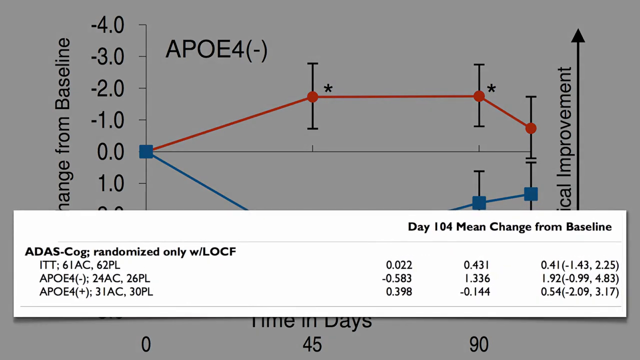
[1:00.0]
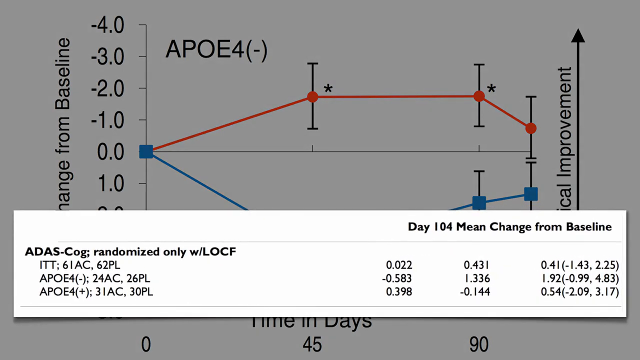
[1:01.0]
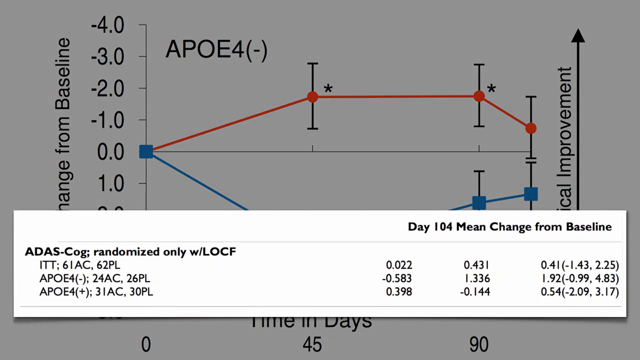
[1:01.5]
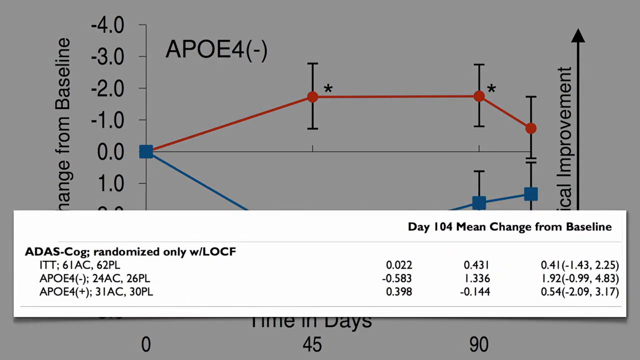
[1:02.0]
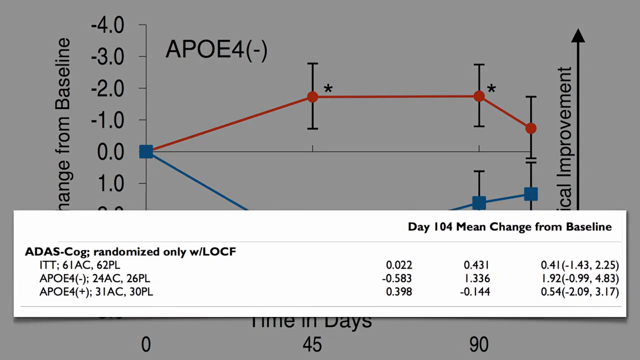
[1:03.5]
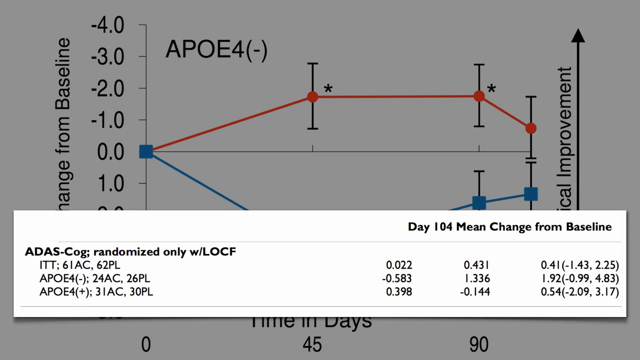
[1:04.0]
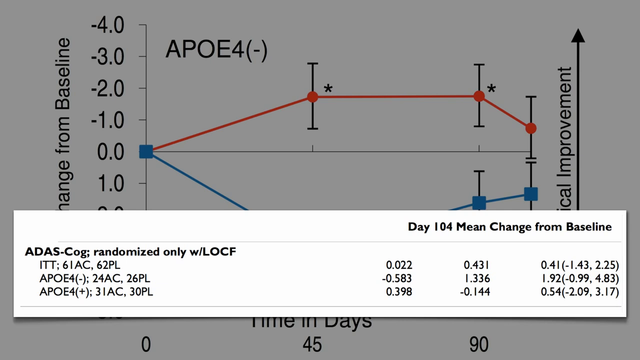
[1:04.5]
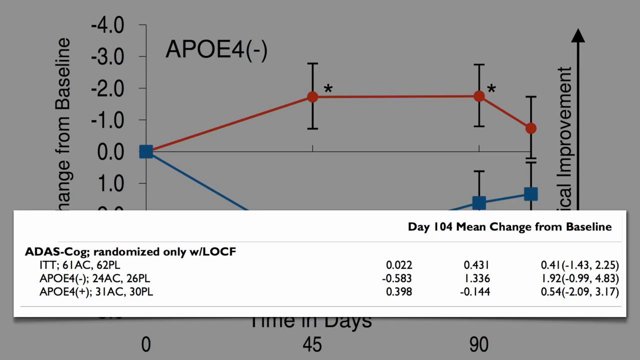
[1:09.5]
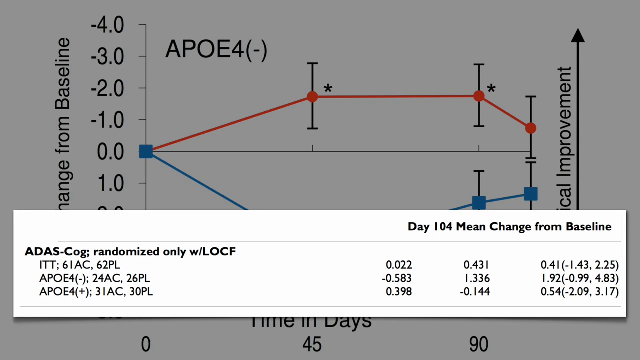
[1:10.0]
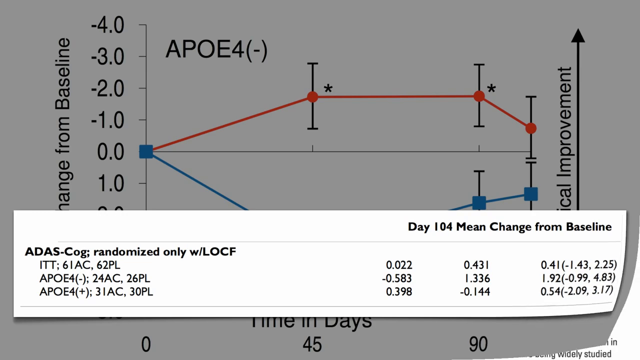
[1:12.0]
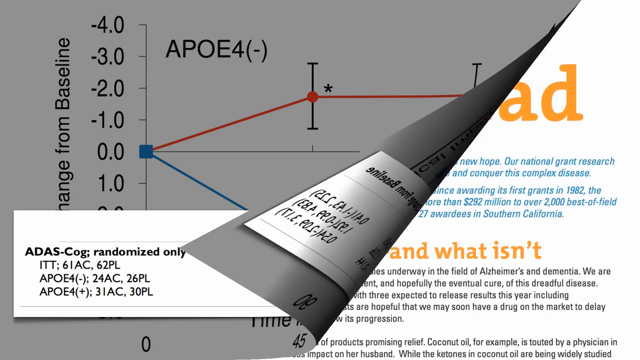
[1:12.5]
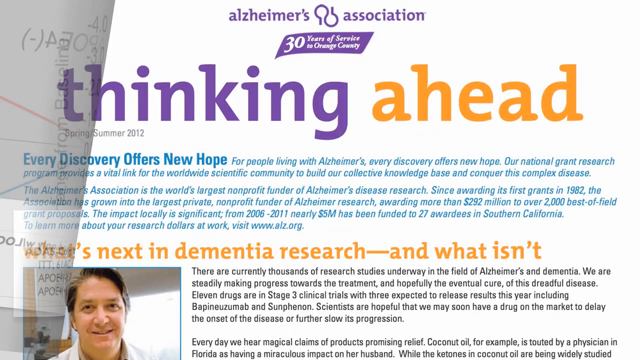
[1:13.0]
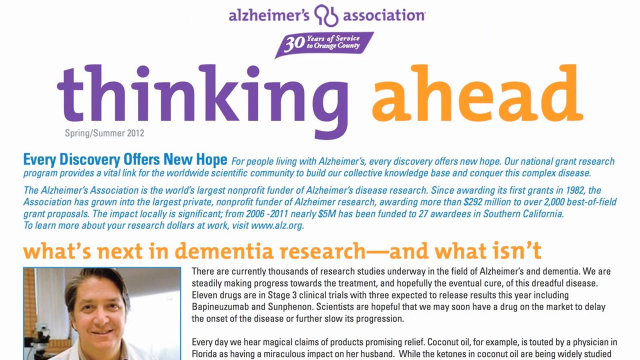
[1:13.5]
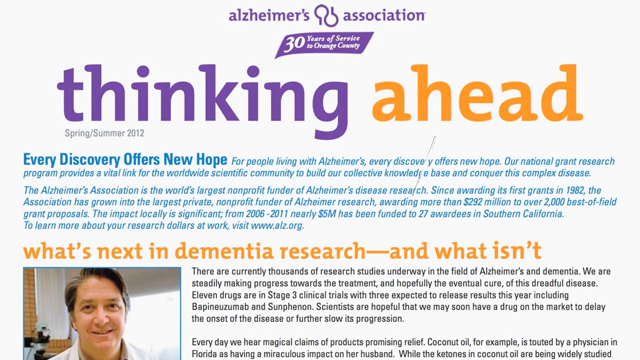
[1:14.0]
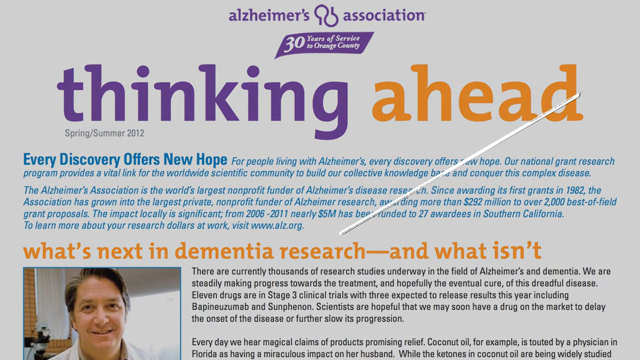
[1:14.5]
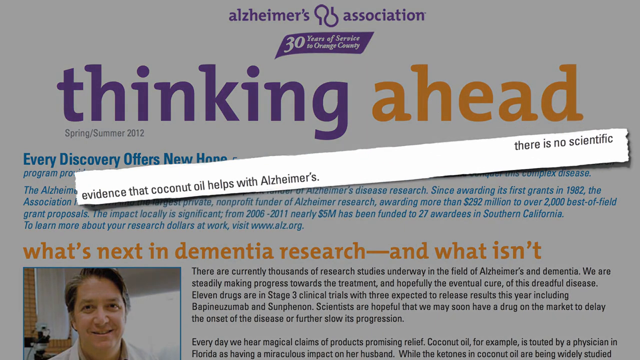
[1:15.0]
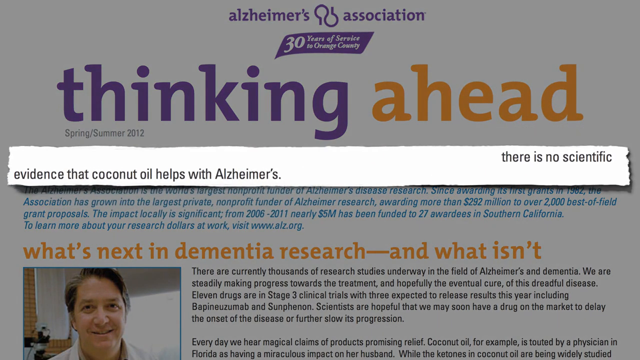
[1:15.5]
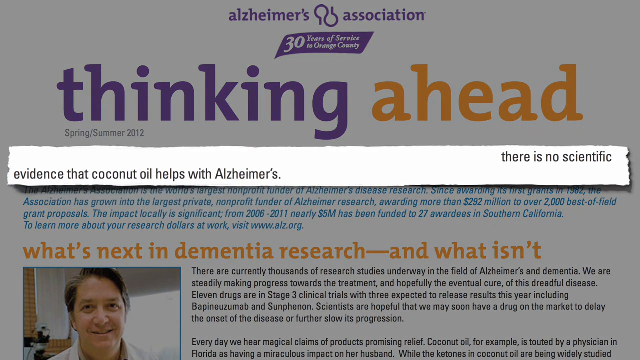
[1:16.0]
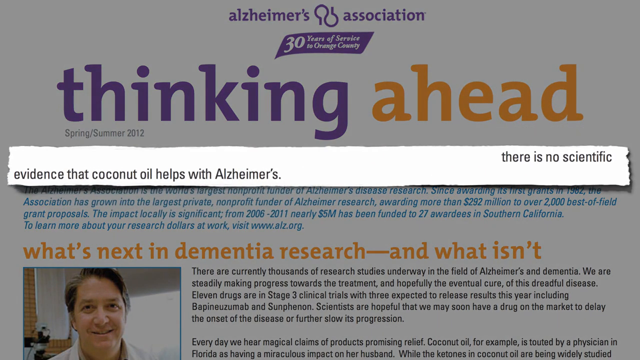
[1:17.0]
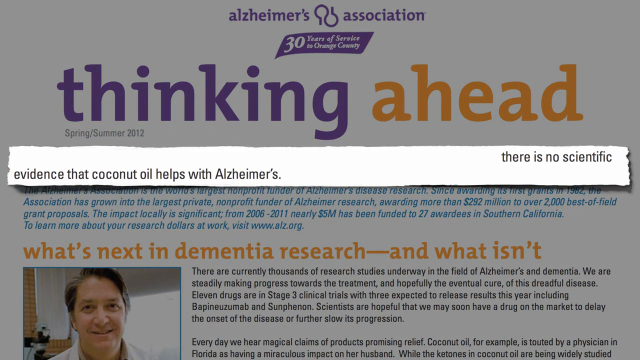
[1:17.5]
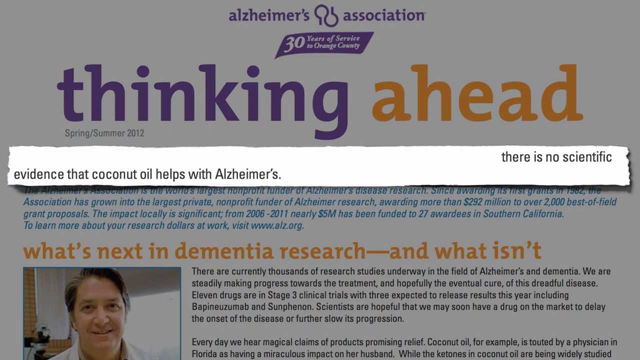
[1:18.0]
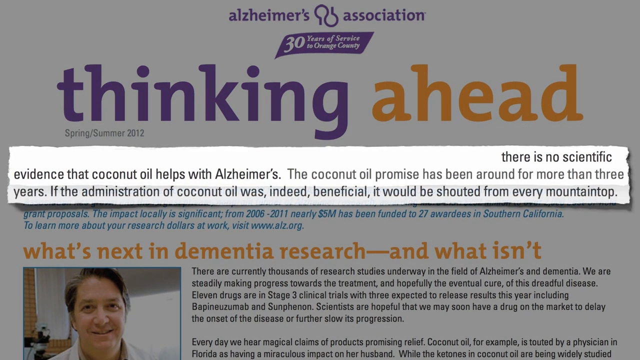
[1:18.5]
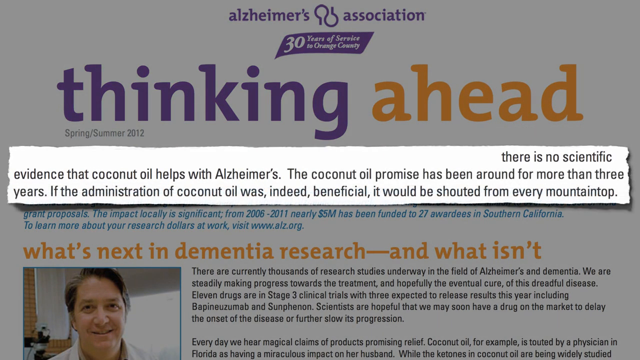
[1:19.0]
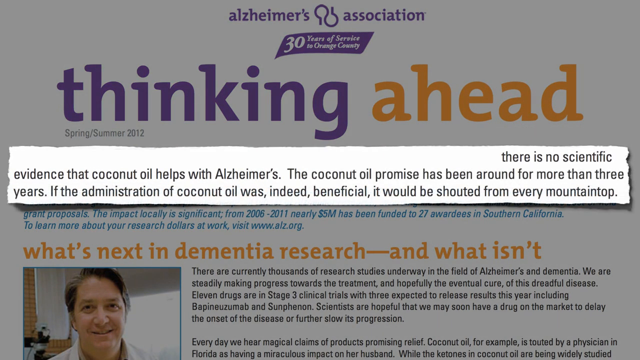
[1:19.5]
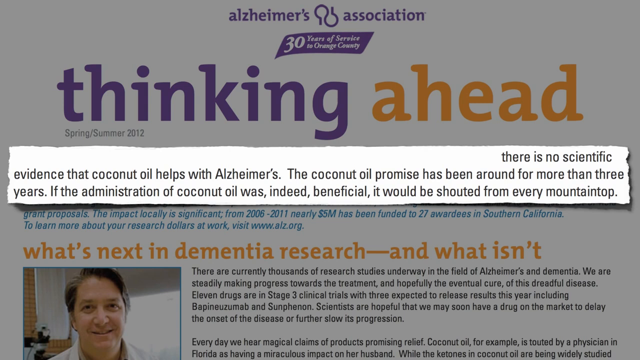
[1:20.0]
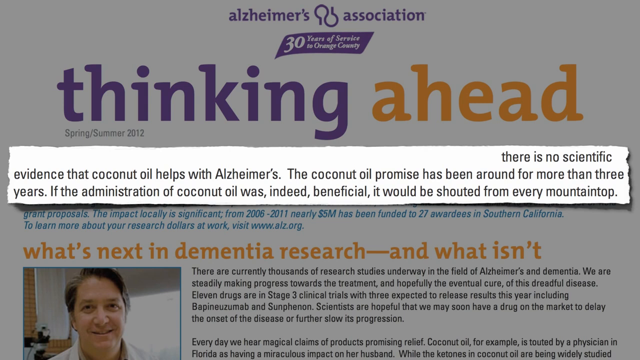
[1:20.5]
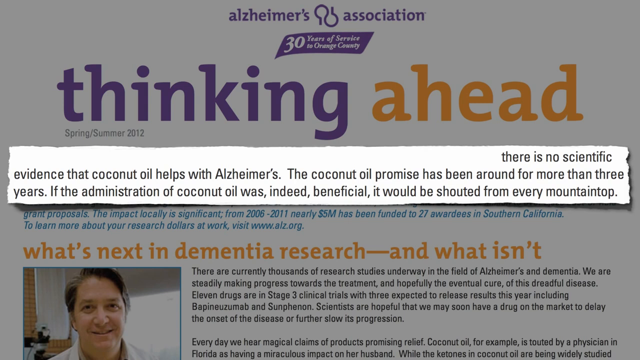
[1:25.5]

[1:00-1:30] A fully completed graph is in the background. The horizontal axis is just visible at the bottom of the screen and reads "time in days", sectioned into 0, 45 days and 90 days. The vertical axis shows change from baseline figures, with 0.0 in the middle; the lower part runs from 0.0 to 4.0 and the part above 0.0 runs up to -4.0 in intervals. There is a red line and a blue line, one depicting a drug and the other a placebo. A white text box appears across the bottom with "day 104 mean change from baseline" and gives some statistics about the different readings from the graph at day 104. The page then disappears almost like turning a page of a book: the bottom right corner curls up and moves away to the left to reveal almost like a slide underneath. This is an article from the Alzheimer's Association, with a purple banner underneath the logo at the top reading "30 years of service in Orange County". The heading of the article is "thinking ahead", with "thinking" in purple and "ahead" in orange, and underneath it gray text reads "spring/summer 2012". The font then changes to blue for two paragraphs. Beneath these is an orange subheading reading "what's next in dementia research and what isn't", with a photograph of a smiling man on the left side under the heading and a paragraph of black text underneath. Then a white rectangular text box comes in, reading "there was no scientific evidence that coconut oil helps with Alzheimer's The coconut oil promise has been around for more than three years. If the administration of coconut oil was indeed beneficial, it would be shouted from every mountaintop."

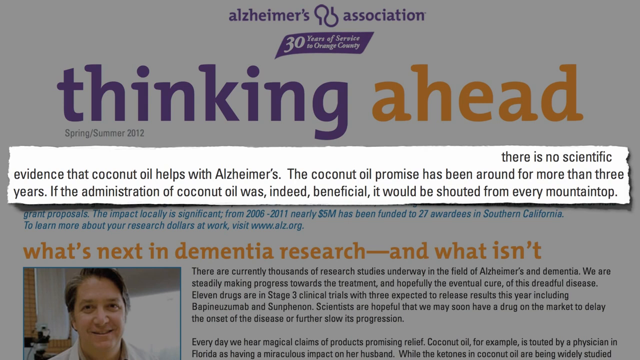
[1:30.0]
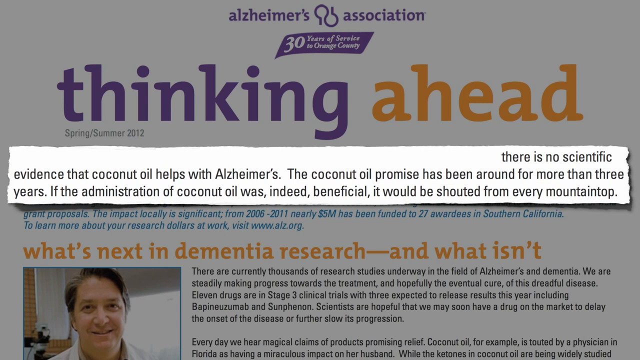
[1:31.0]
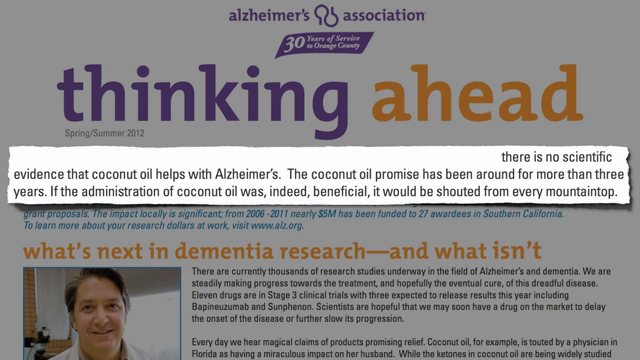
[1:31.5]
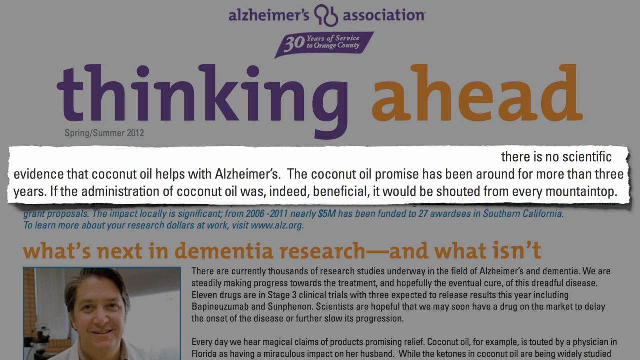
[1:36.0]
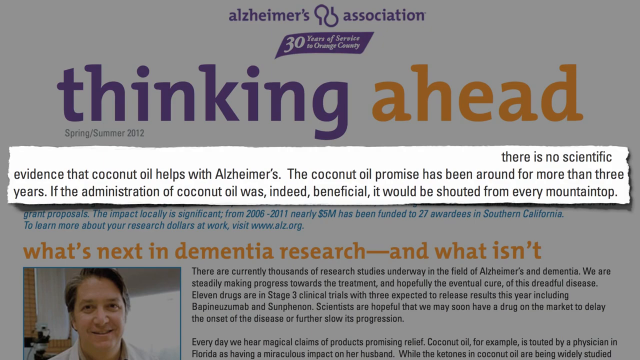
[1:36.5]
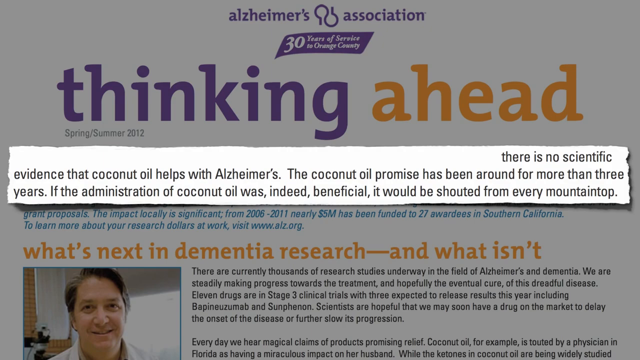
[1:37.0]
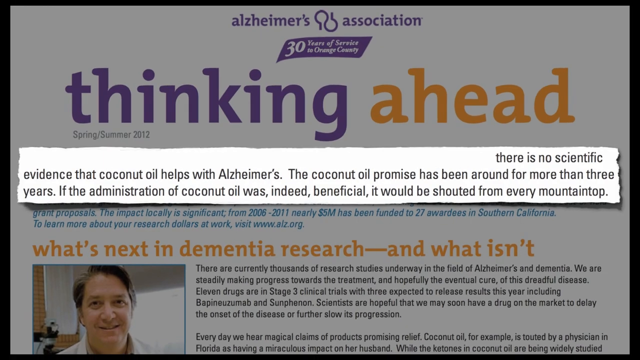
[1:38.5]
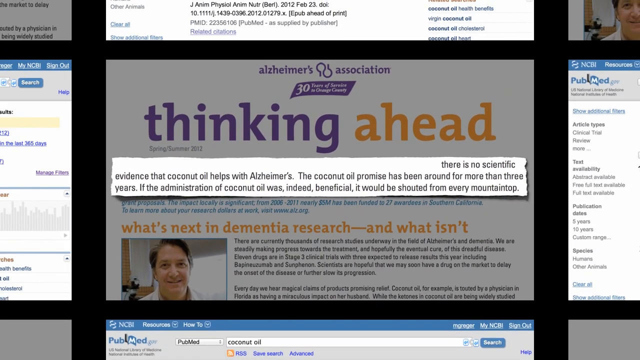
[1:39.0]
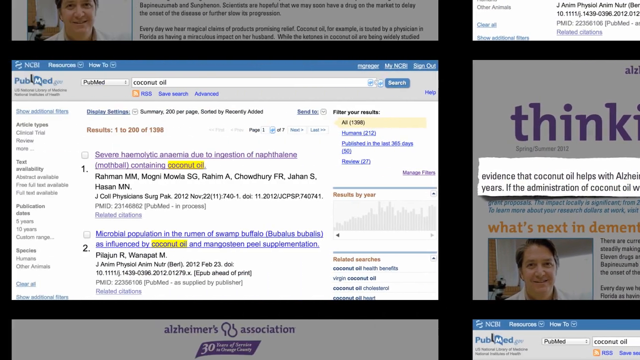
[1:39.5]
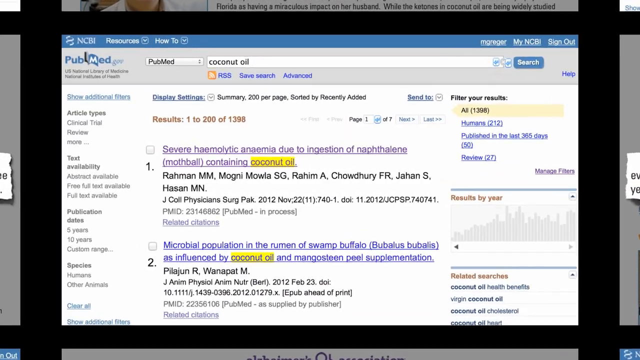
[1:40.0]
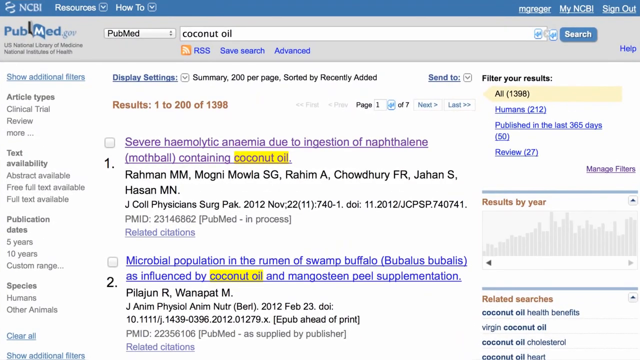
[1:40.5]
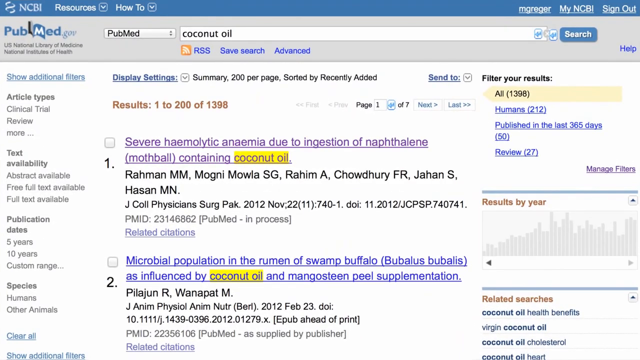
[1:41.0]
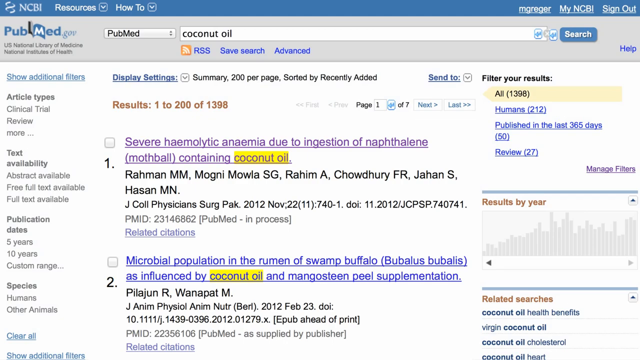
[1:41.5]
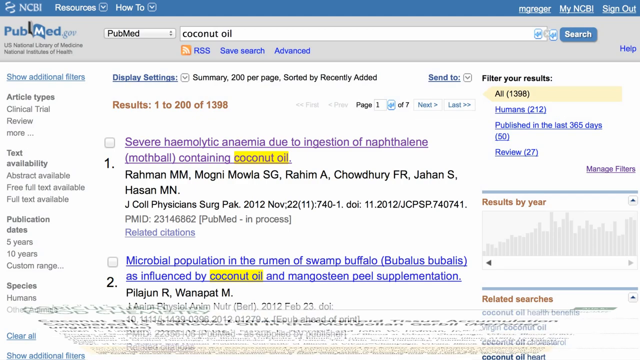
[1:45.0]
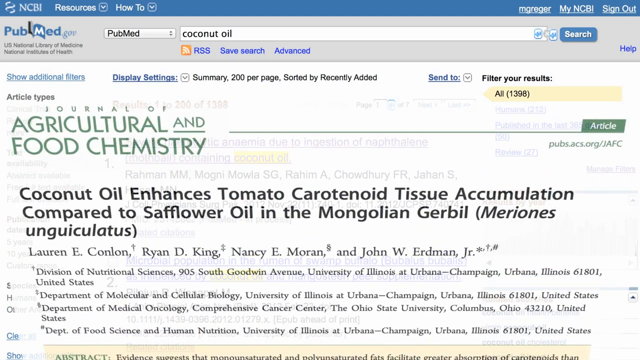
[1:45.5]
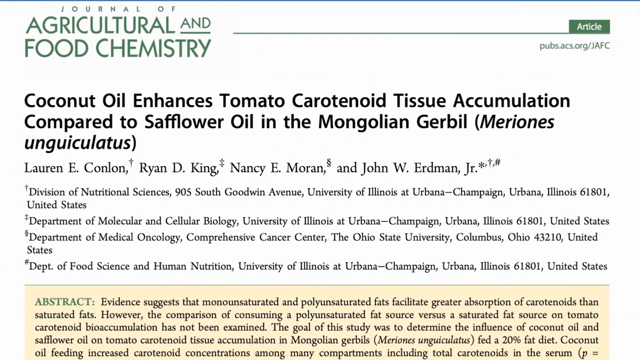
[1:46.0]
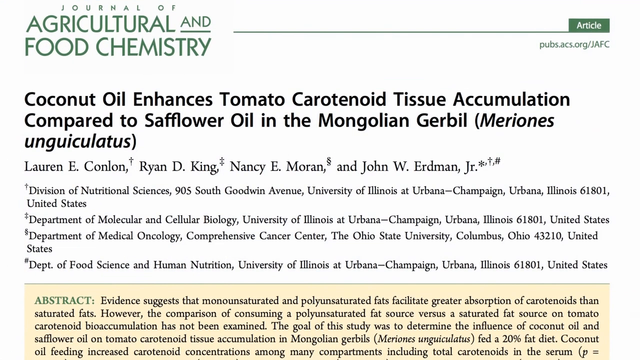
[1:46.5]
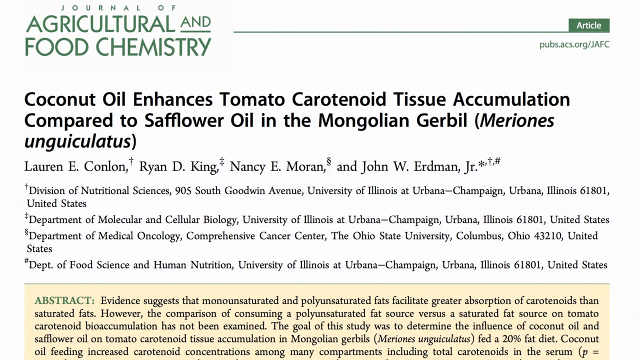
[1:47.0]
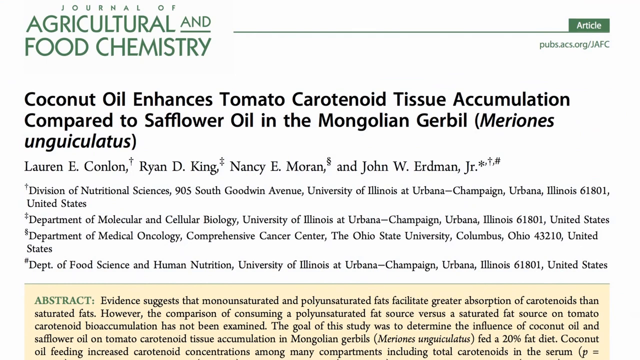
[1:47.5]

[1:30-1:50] The title at the top says "Alzheimer's Association", with a kind of double circular logo between the two words. Underneath is almost a purple flag reading "30 years of service in Orange County", and below that the title, with "thinking" in purple and "ahead" in orange. Overlaid on top of this article about what's next in dementia research and what isn't is a kind of piece of paper reading "there is no scientific evidence that coconut oil helps with Alzheimer's. The coconut oil promise has been around for more than three years. If the administration of coconut oil was indeed beneficial it would be shouted from every mountaintop." Then, in an effect, the page goes smaller and shows duplicates of that page and other pages all around it, before focusing on the page to the left, a page from the resource site pubmed.gov. At the top is a search box with "coconut oil" entered into it, and the display shows 1 to 200 of 1,398 results. The first result is "severe hemolytic anemia due to ingestion of naphthalene mothball containing coconut oil", and on each result the words "coconut oil" are highlighted in yellow. Another effect brings the next slide in from the bottom, covering the current slide.